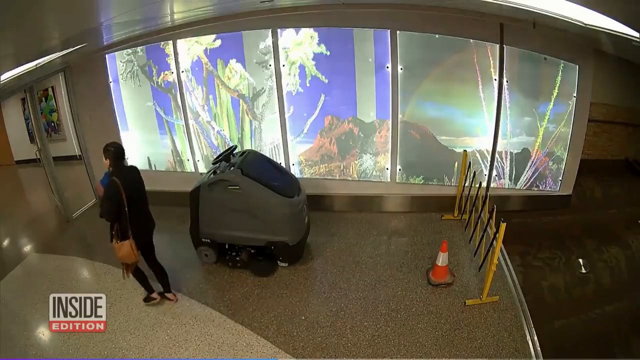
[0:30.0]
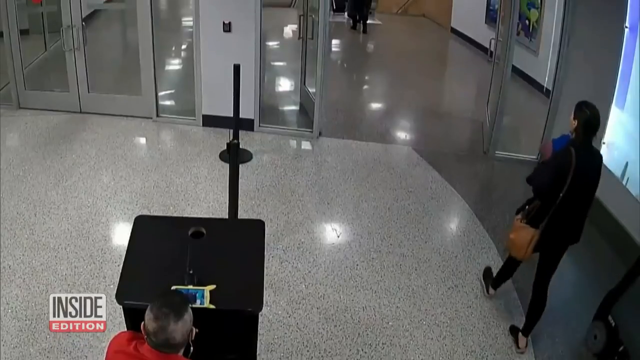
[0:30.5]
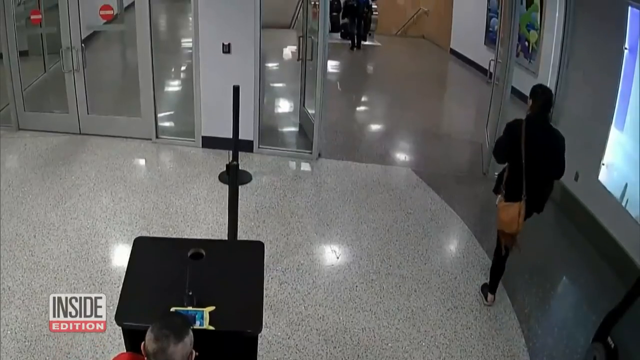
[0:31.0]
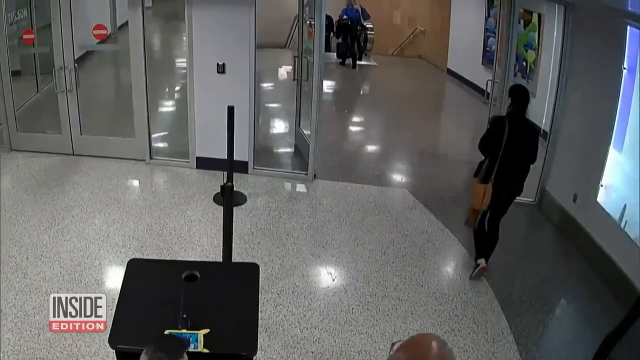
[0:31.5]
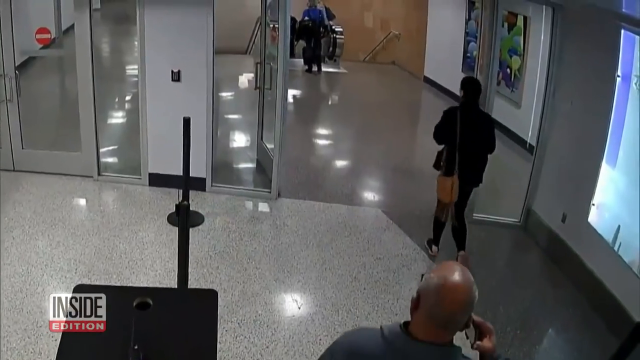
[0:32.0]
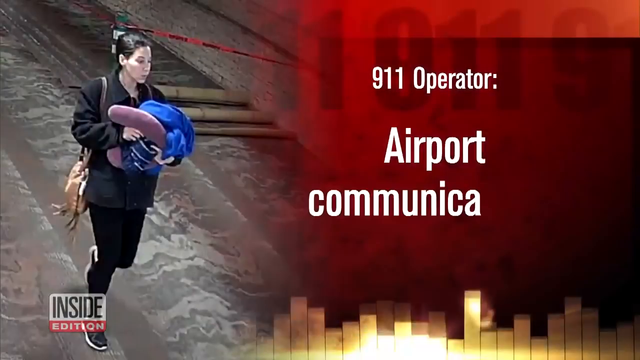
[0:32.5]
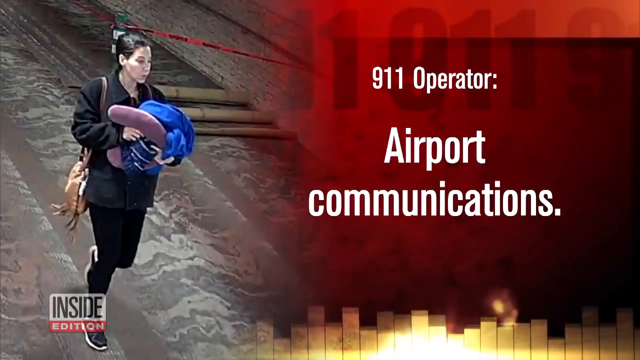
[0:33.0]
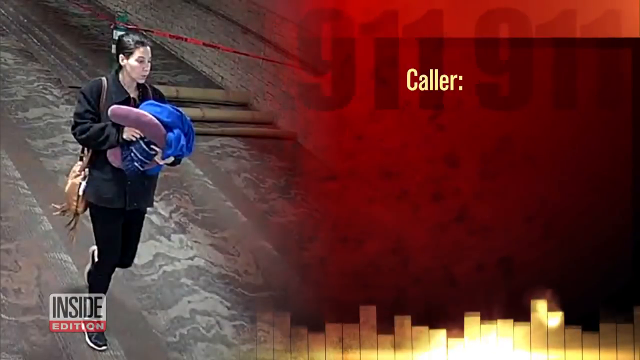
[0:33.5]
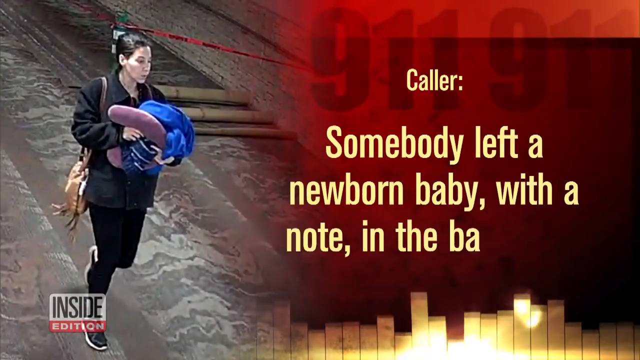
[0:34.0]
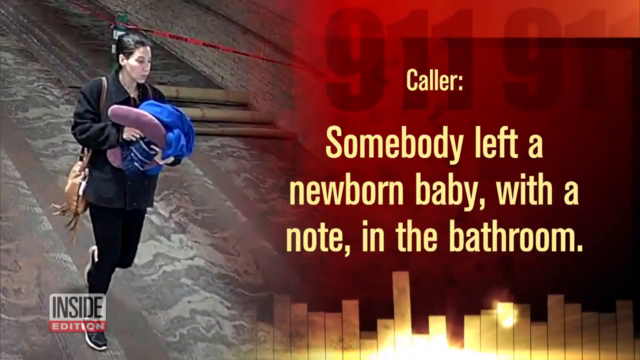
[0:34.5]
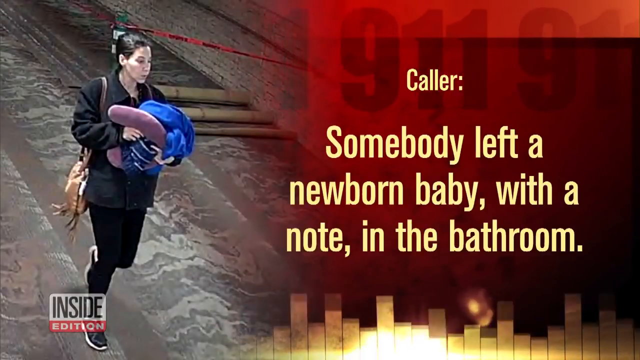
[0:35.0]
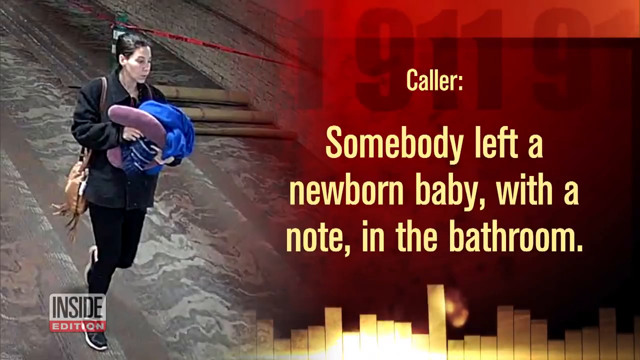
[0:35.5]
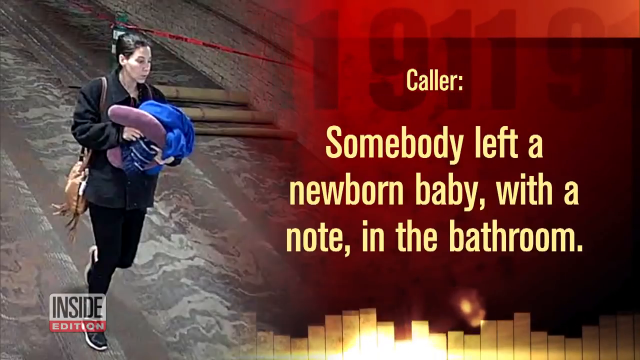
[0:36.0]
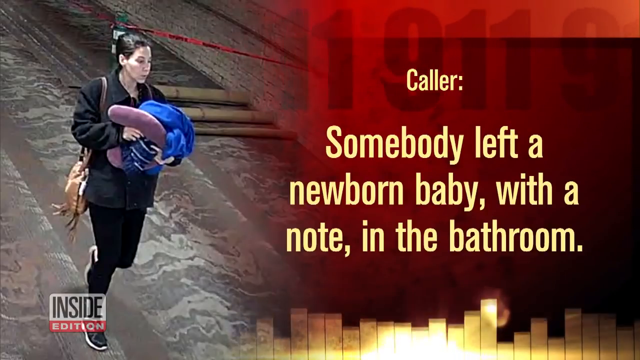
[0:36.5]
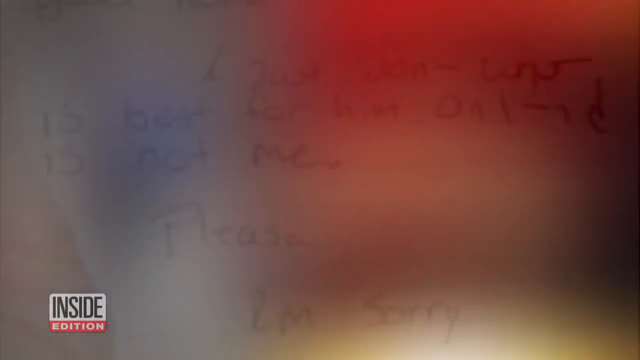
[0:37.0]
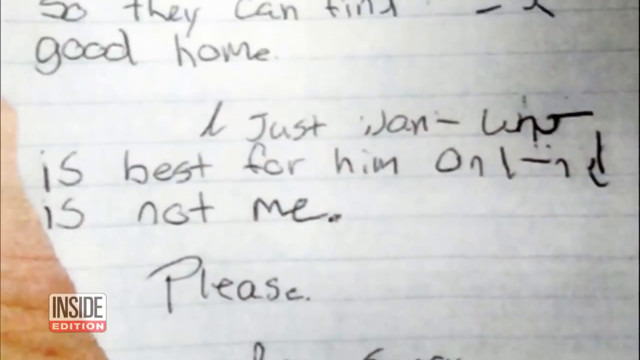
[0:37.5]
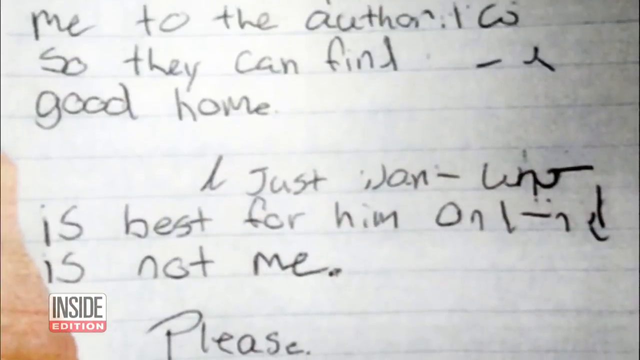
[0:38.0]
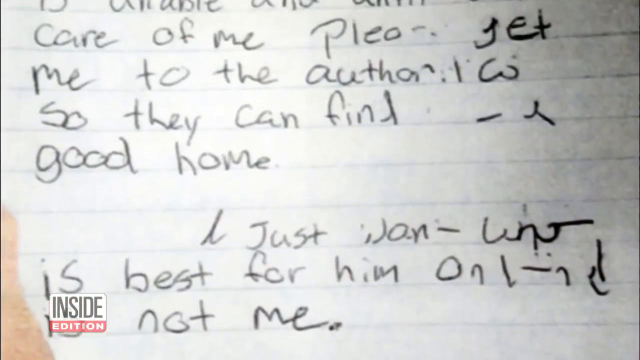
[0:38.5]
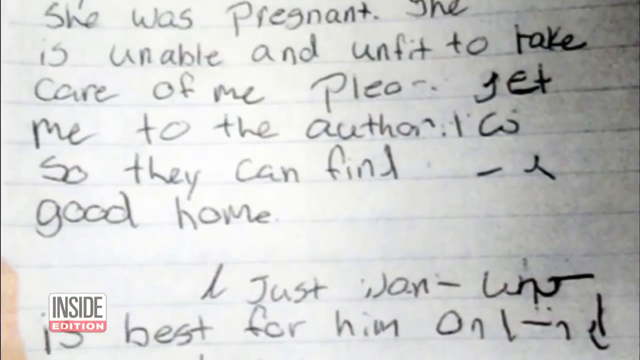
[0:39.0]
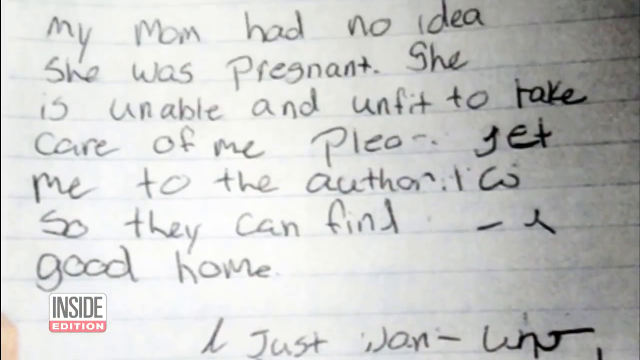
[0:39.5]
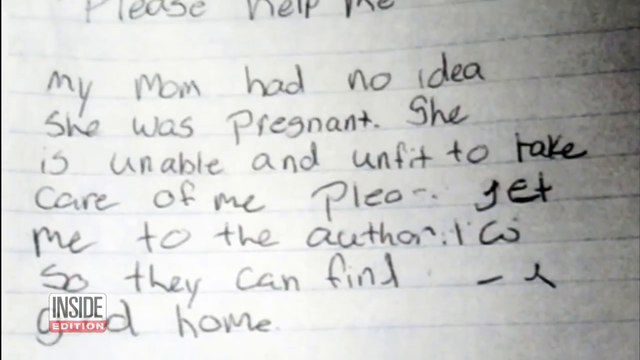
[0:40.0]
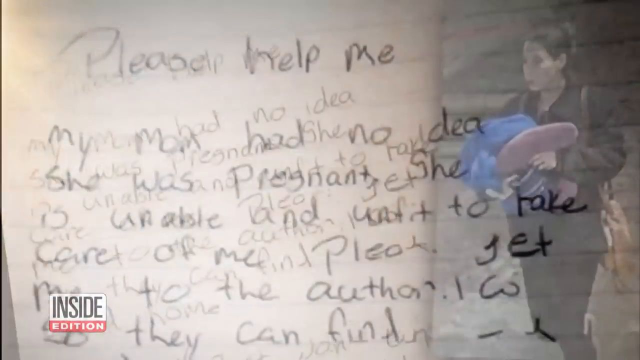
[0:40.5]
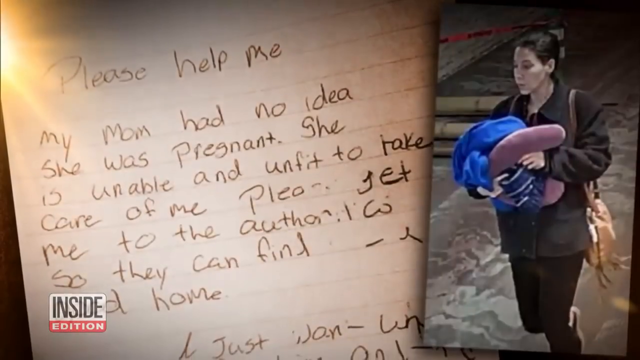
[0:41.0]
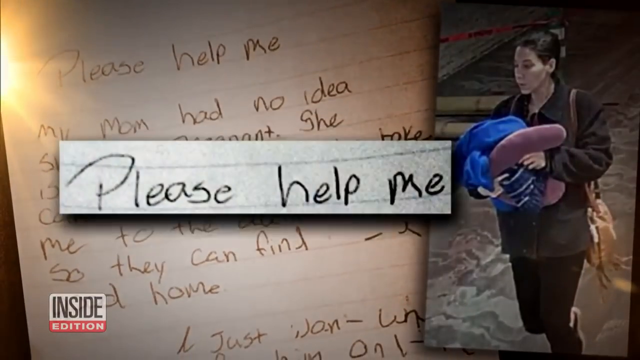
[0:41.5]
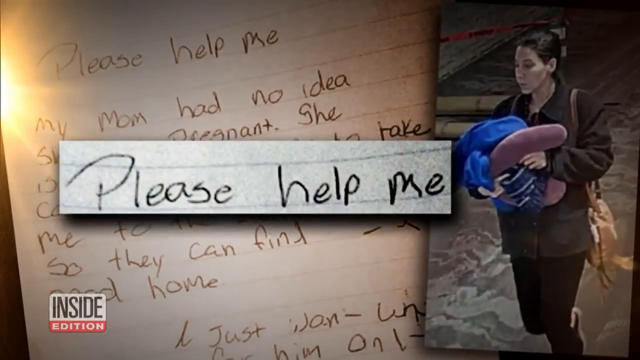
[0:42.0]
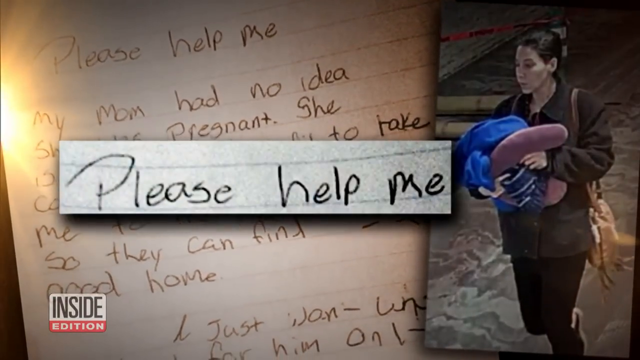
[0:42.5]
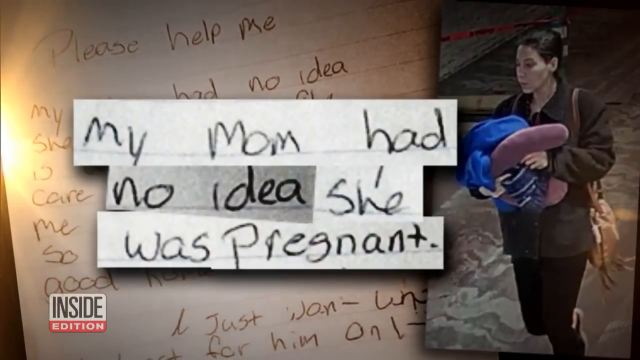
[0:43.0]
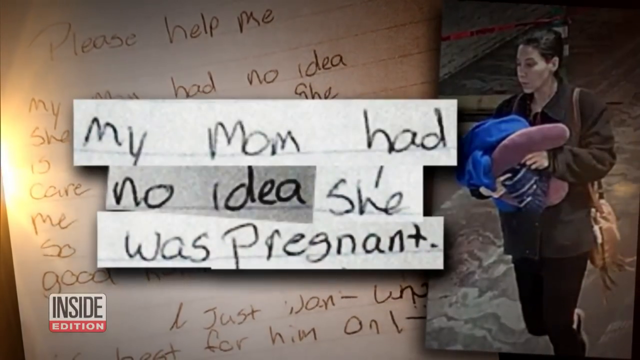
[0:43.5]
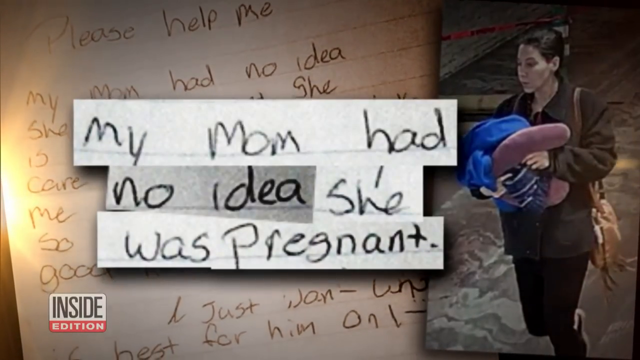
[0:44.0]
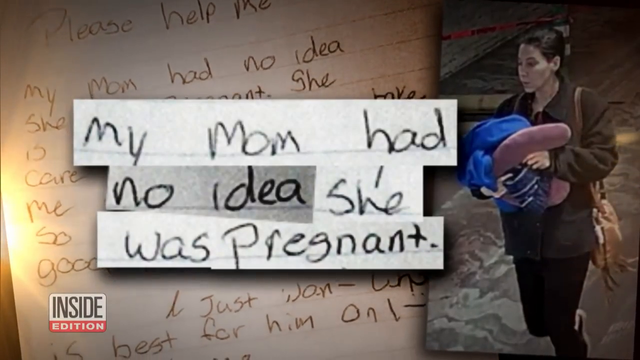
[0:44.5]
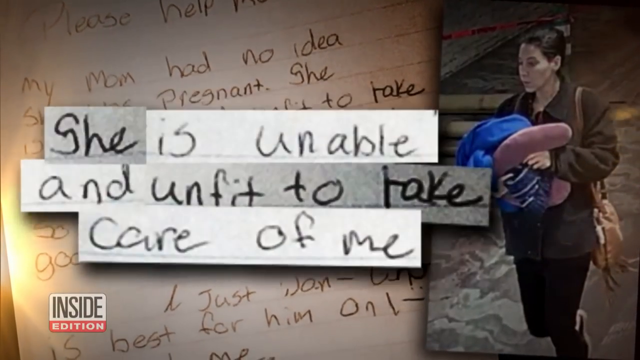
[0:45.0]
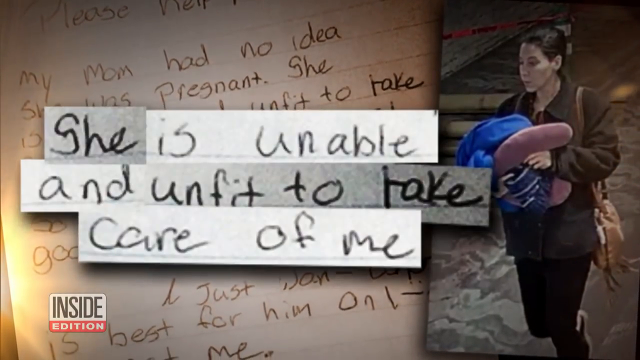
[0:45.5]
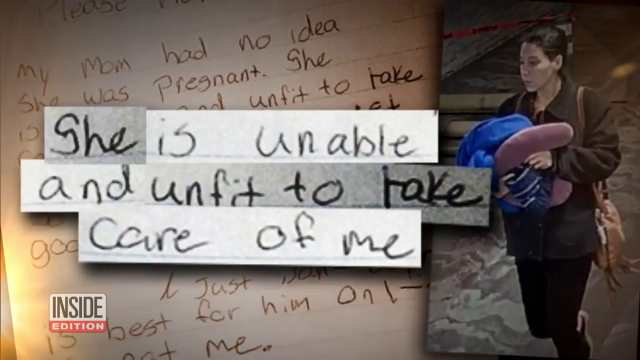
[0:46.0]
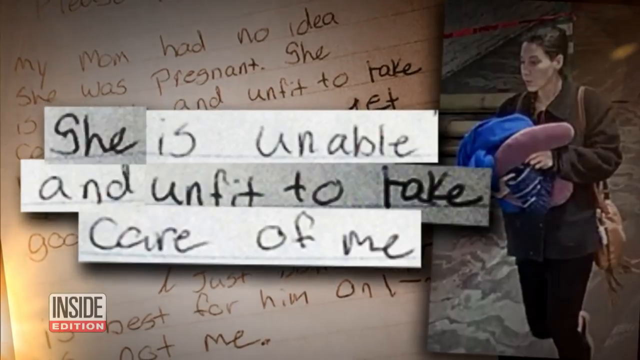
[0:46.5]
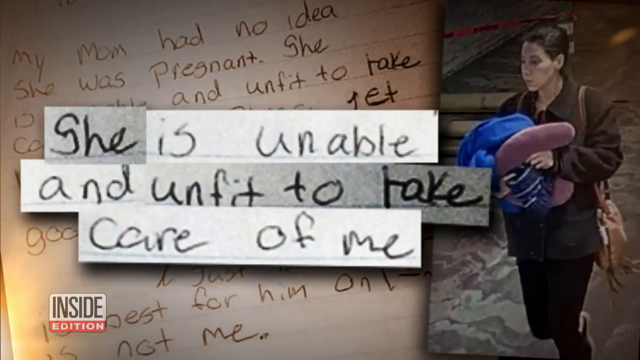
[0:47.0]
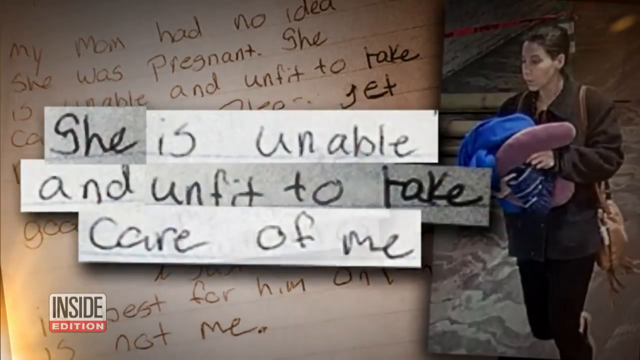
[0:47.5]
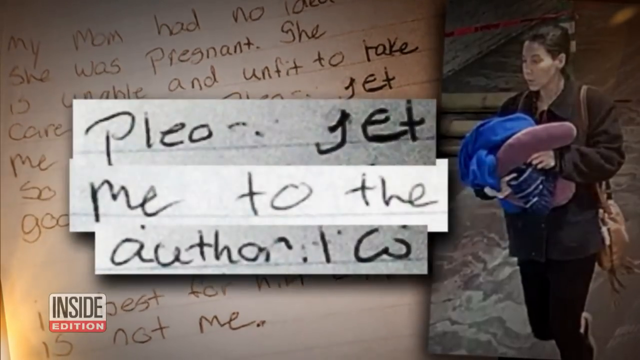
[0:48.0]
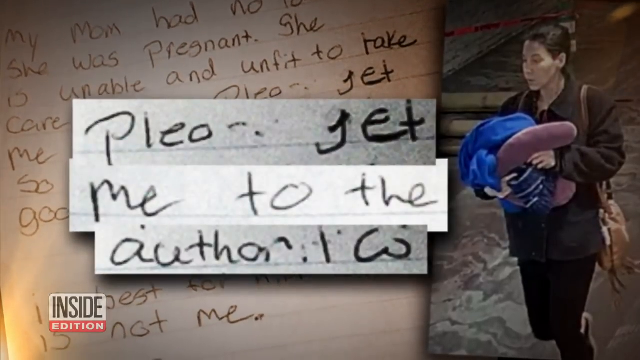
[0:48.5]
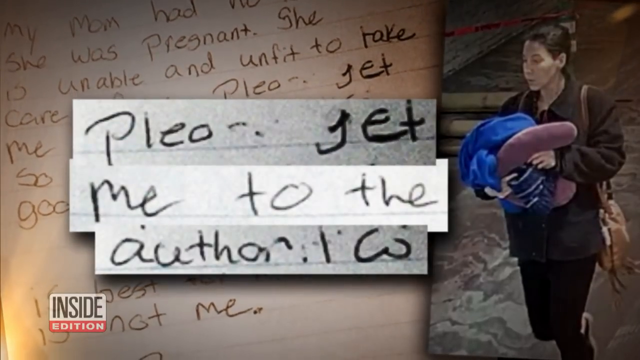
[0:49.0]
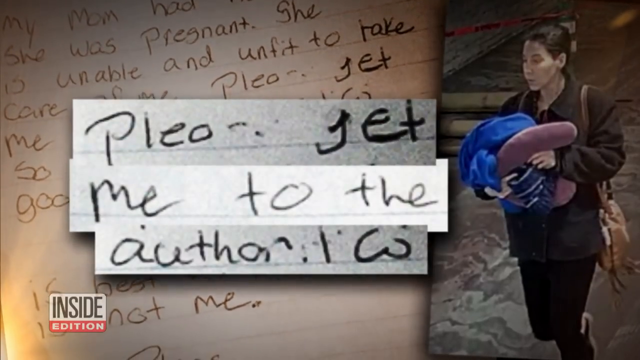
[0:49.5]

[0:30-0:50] The woman walks through an airport, passing a motorized vehicle behind her and a screen showing an outdoor scene. She carries some things in her arms, possibly a jacket or a bag, wears a purse, and is dressed all in black. The video cuts to a handwritten note, and on-screen text says a note was found along with the baby in the bathroom. The note asks for someone to help her, says that her mother does not know she is pregnant and that she is unfit to care for her or the baby, and says she wants the best for the baby but cannot care for it. The video cuts back to the woman walking through the airport carrying several things, including something blue; she may be carrying the baby rolled up in a jacket or a bag, though it is hard to tell what she is carrying.